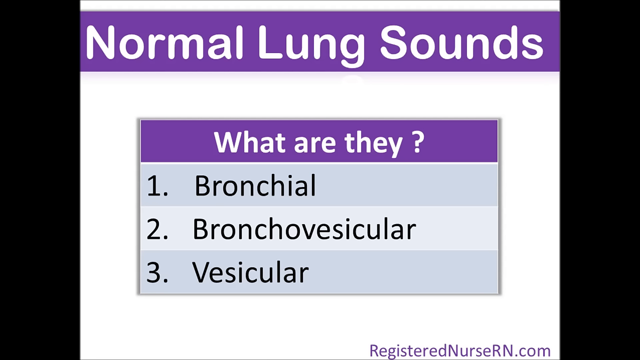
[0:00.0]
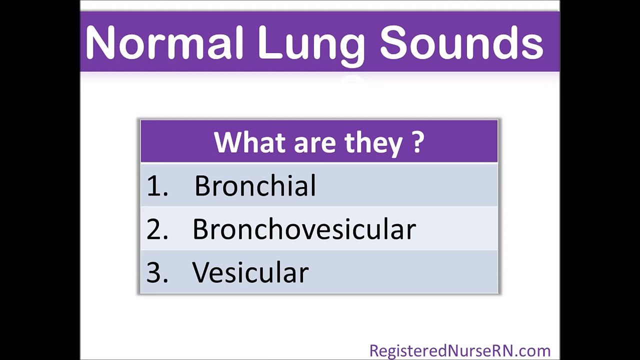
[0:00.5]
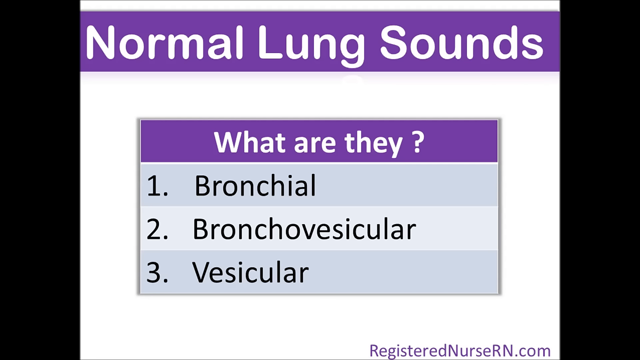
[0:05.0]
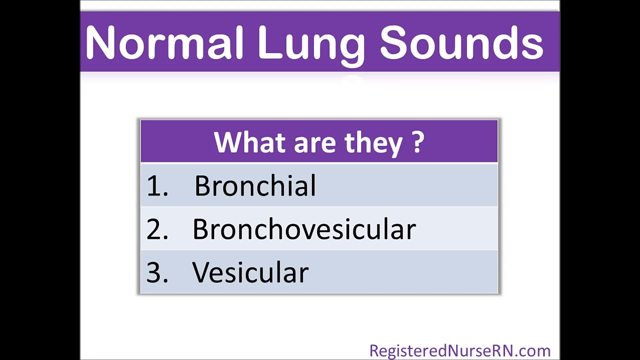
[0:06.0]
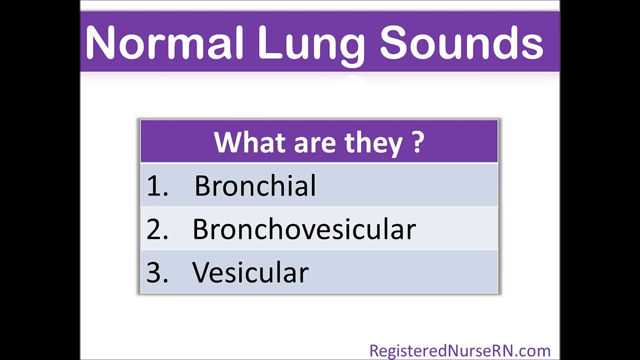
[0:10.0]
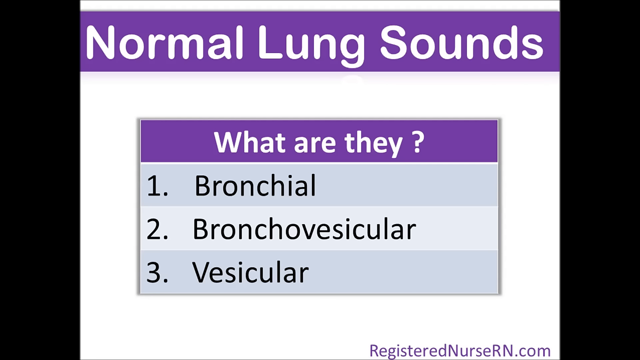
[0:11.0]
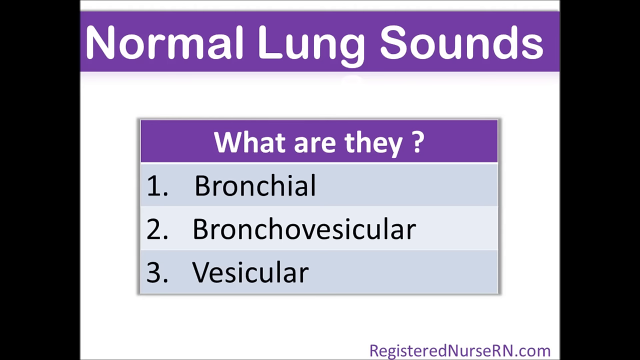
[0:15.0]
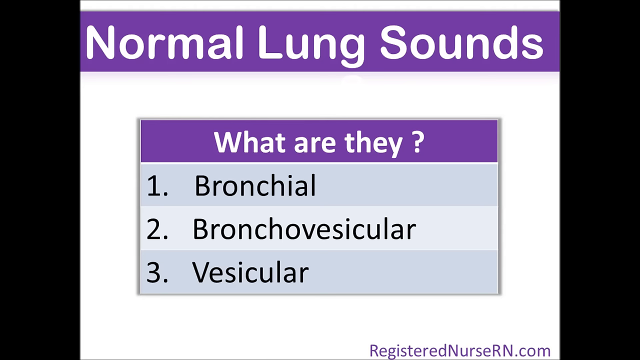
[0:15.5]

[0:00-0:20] The opening screen has black borders on the left and right, with the main content in the middle. It is a fairly old-looking, not especially fancy slide with a white background. Across the top is a purple field with white words reading "Normal Lung Sounds", with the N, L and S capitalized. Beneath it is a small table that looks like it was made in PowerPoint or even Excel. Its top row is purple, with white text reading "What are they ?", with a space between "they" and the question mark. Below are three rows in alternating light blue colors, labeled 1, 2 and 3, reading "Bronchial", "Bronchovesicular" and "Vesicular" in black text. In the lower right is an online address, "registerednurseRN.com", in a sort of light lavender-ish purple. The still screen holds for a long time. The slide then looks like it flips around, rotating to show its backside, and a new slide appears.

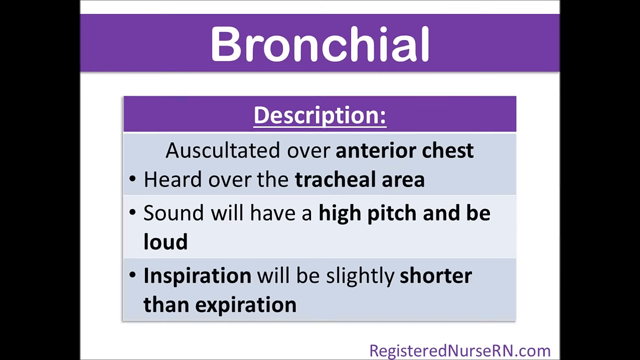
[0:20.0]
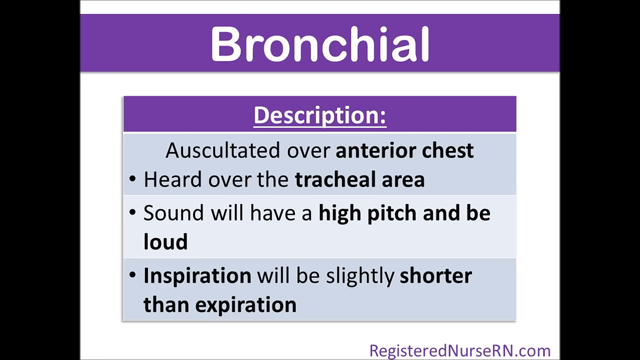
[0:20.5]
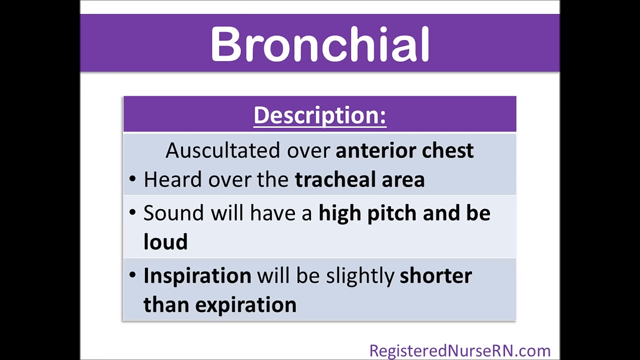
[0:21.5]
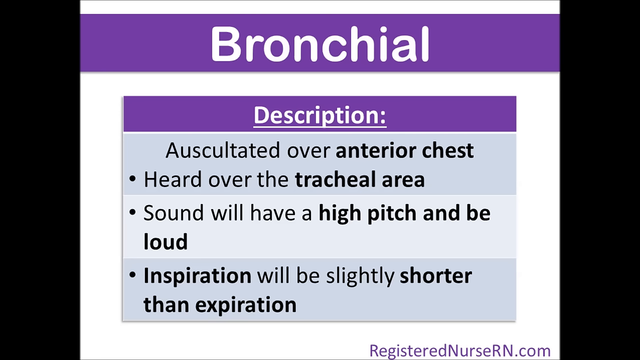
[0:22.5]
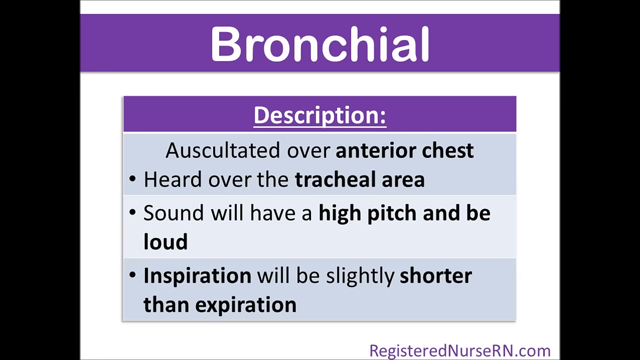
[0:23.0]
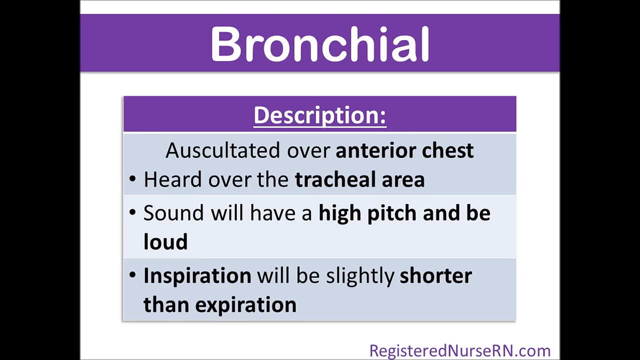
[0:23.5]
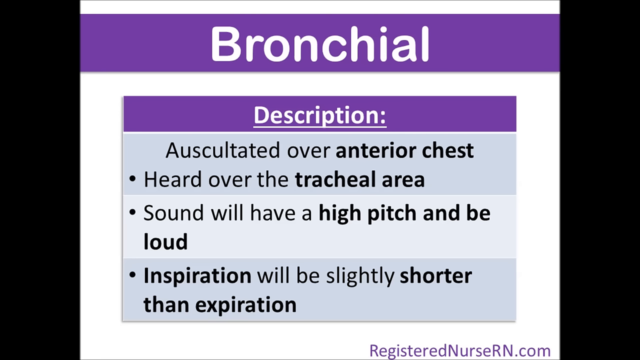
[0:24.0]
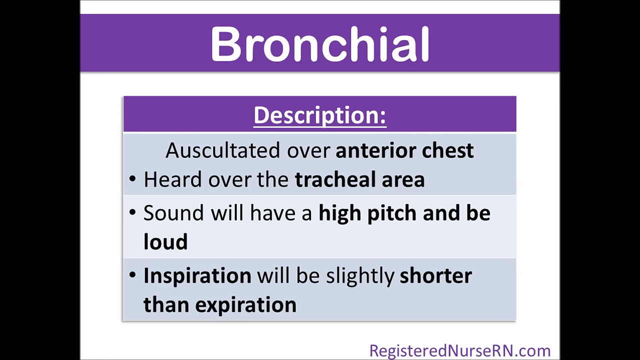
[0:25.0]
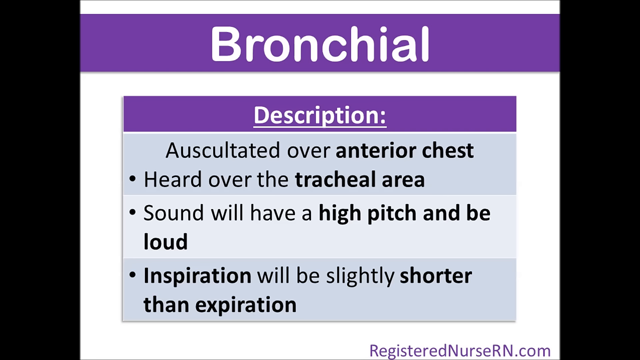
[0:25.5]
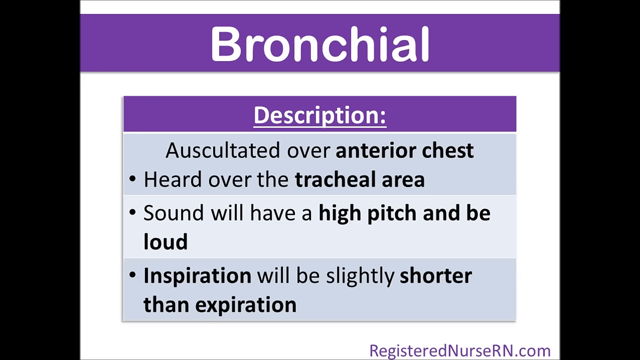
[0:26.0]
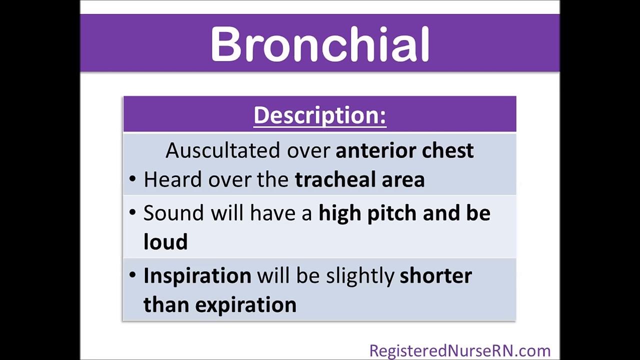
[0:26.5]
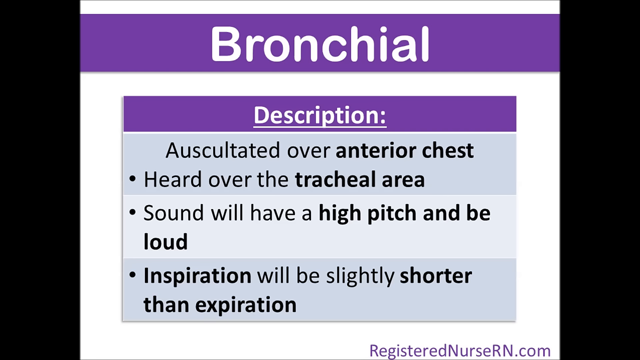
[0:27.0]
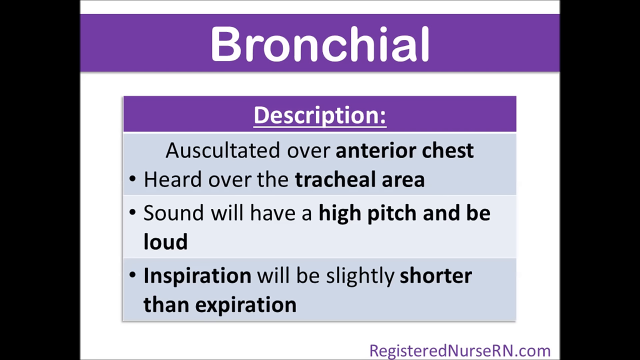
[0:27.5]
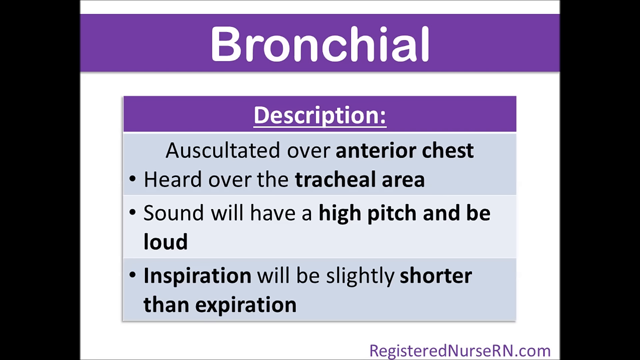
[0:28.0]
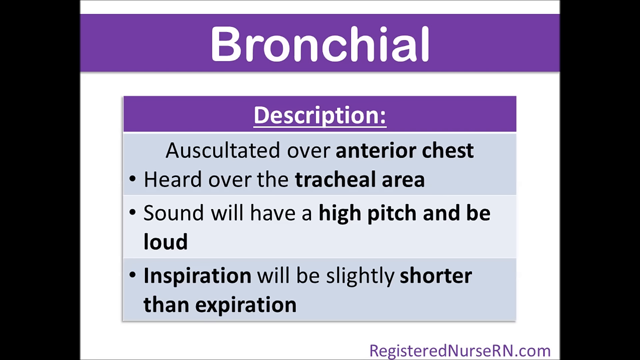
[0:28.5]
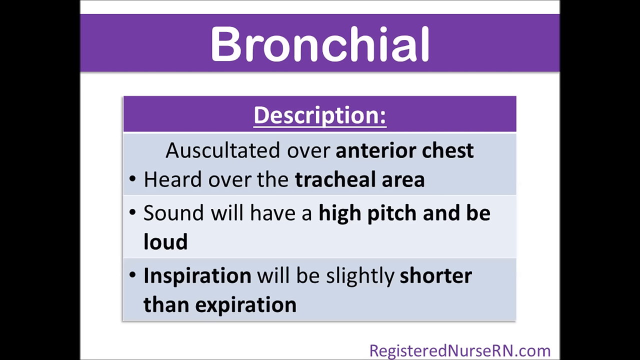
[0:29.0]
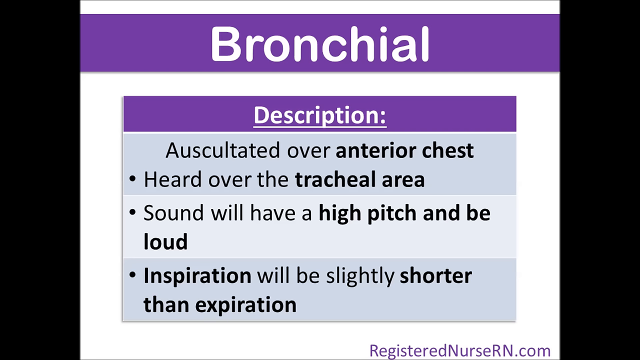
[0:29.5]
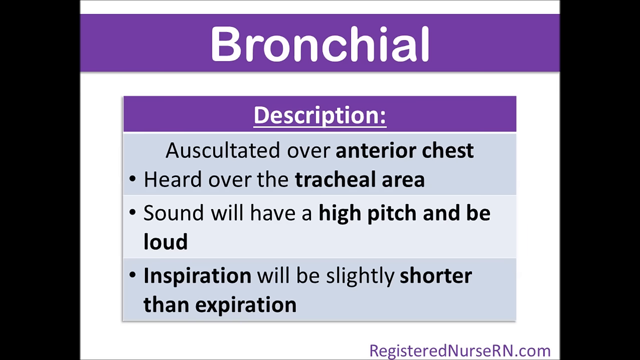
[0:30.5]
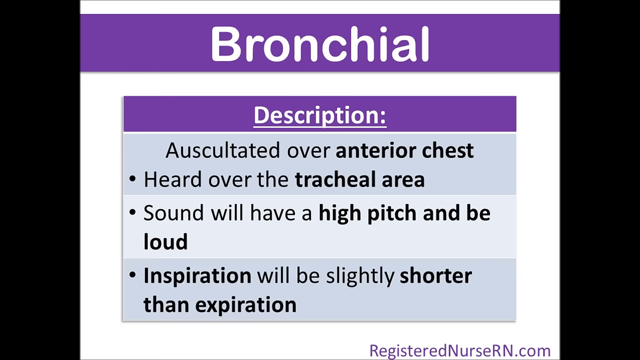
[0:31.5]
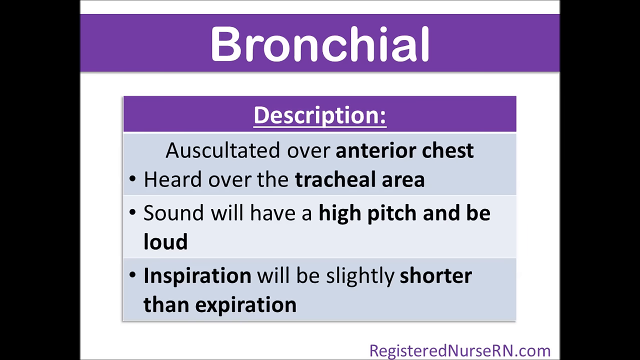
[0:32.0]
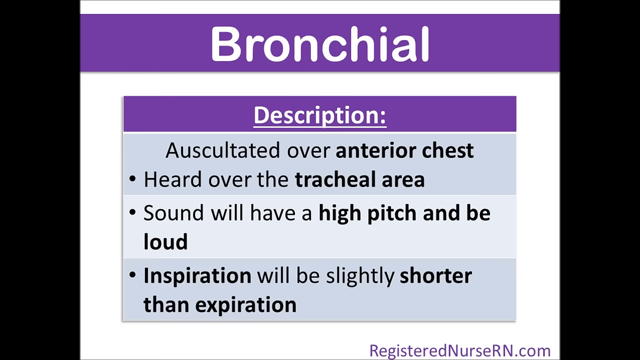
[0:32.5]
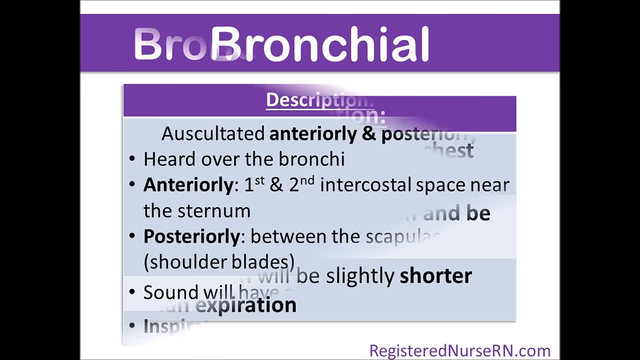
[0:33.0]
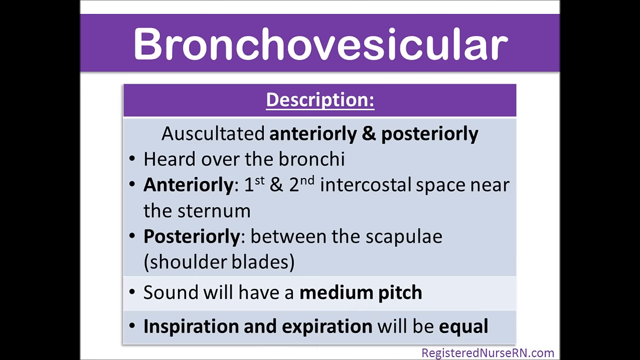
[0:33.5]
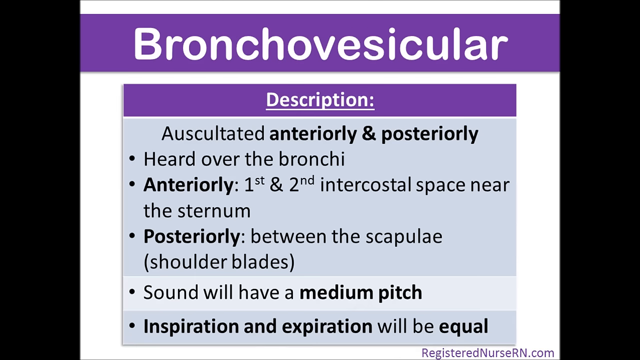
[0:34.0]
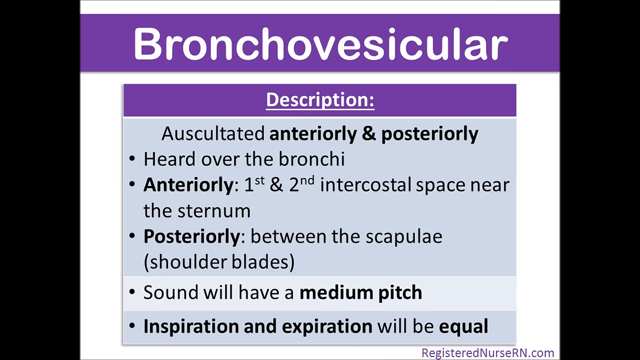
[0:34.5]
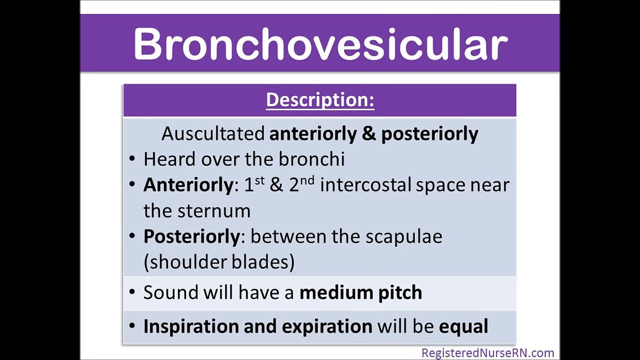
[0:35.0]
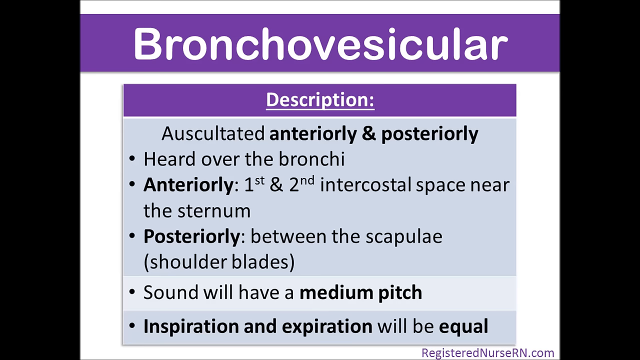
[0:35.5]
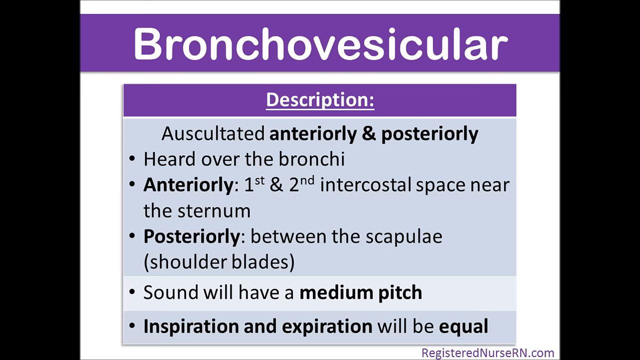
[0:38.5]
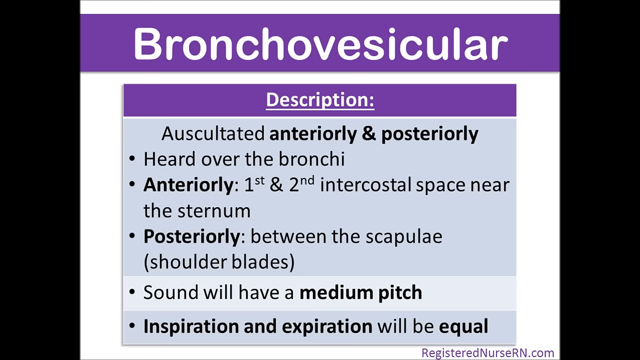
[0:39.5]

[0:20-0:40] The second slide has the same style, with a white-on-purple header at the top reading "Bronchial". The table beneath has much the same setup: three rows below a header row. The purple header row reads "Description:", all underlined. The three rows below now use bullet points instead of numbers, all in black, with some words in bold. The top row reads "Auscultated over anterior chest, heard over the tracheal area", the second "Sound will have a high pitch and be loud", and the third "Inspiration will be slightly shorter than expiration", with words such as "inspiration" and "shorter than expiration" in bold. The formatting of the top row is odd: its bullet point is to the left of the word "Heard" rather than at the top of the text, possibly meant as a header. After a while a new slide appears with the header "Bronchovesicular". It still has "Description" and three fields. The top field has multiple bullet points and seems to have a header reading "Auscultated anteriorly & posteriorly", with an ampersand. Five bullet points are spread out below that. The top one reads "Heard over the bronchi", and the next two read "anteriorly" and "posteriorly", each with more words to its right. The wording is all fairly scientific and medical.